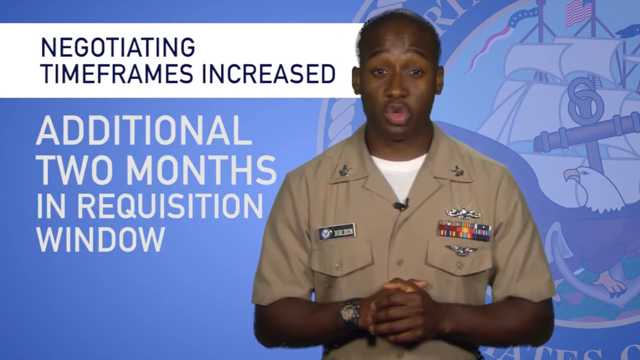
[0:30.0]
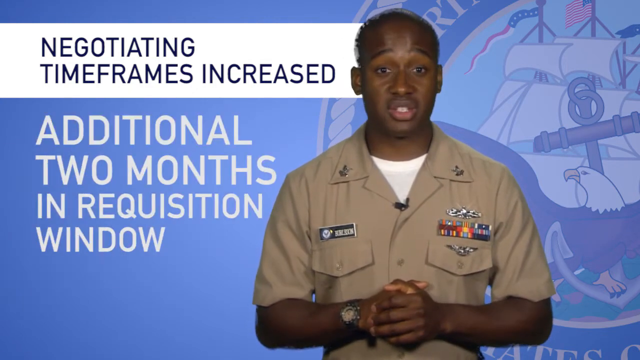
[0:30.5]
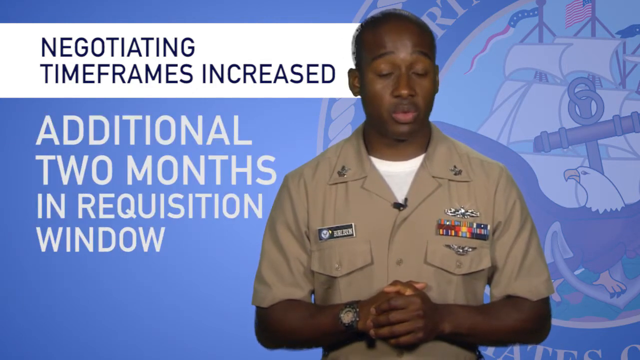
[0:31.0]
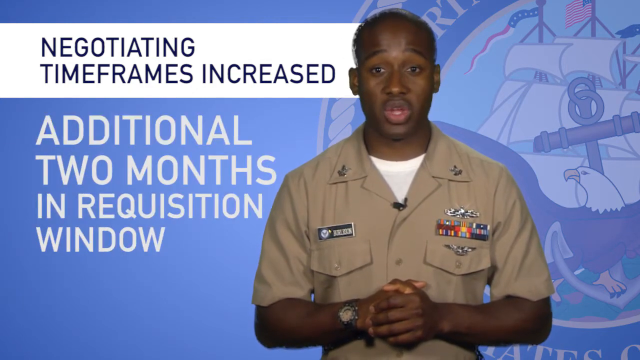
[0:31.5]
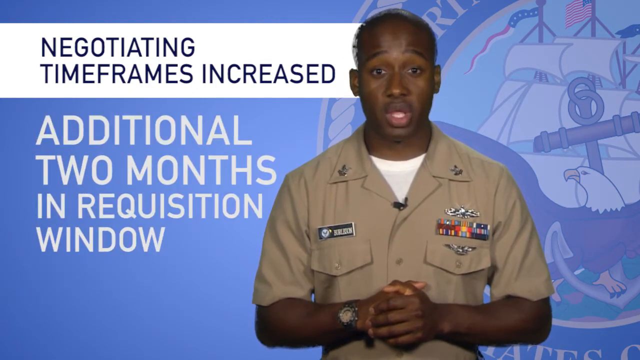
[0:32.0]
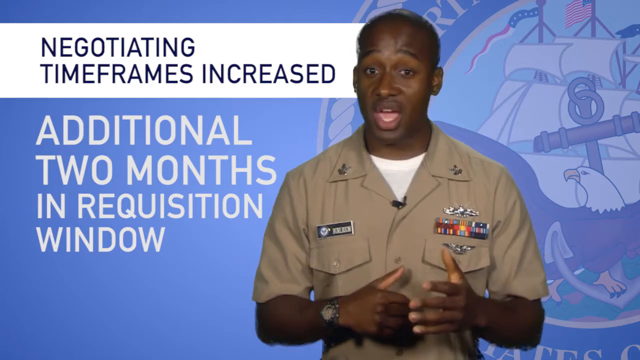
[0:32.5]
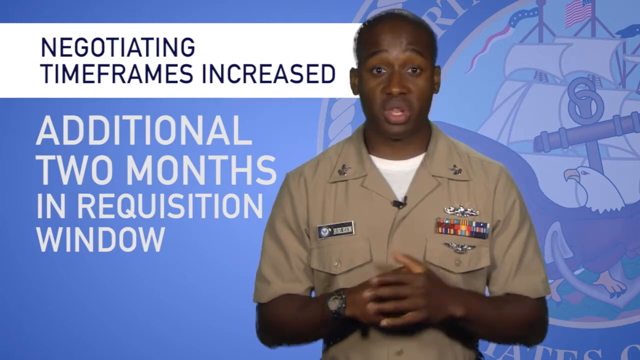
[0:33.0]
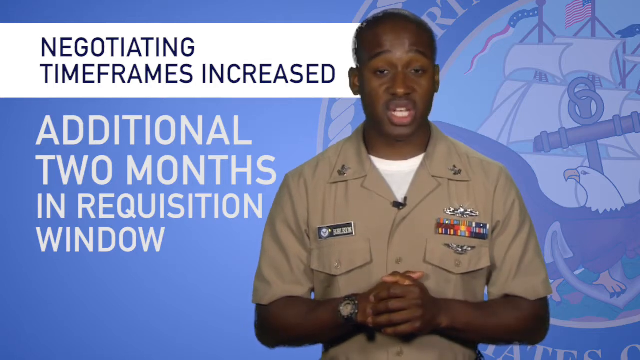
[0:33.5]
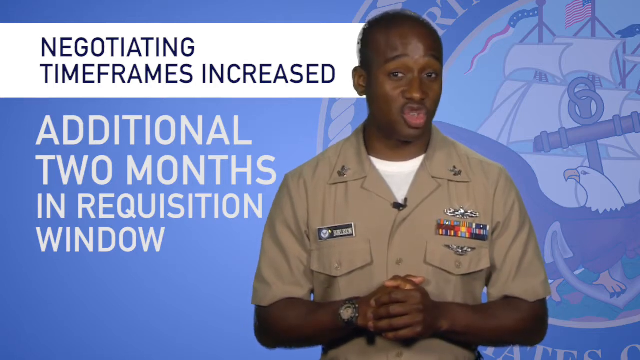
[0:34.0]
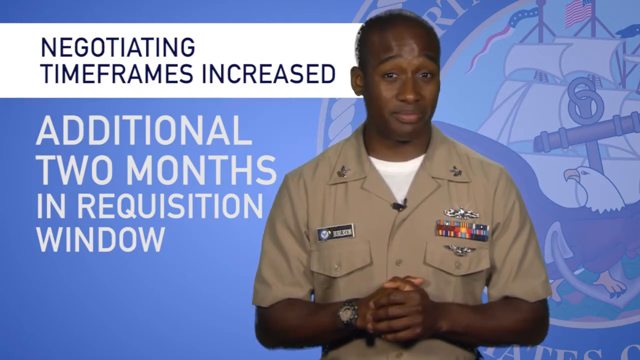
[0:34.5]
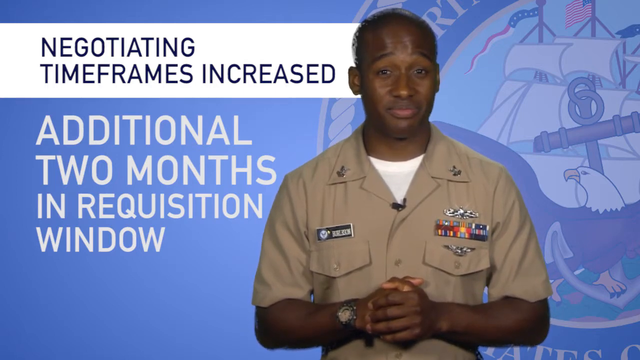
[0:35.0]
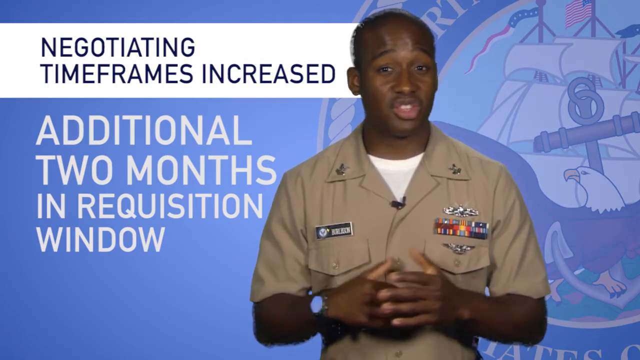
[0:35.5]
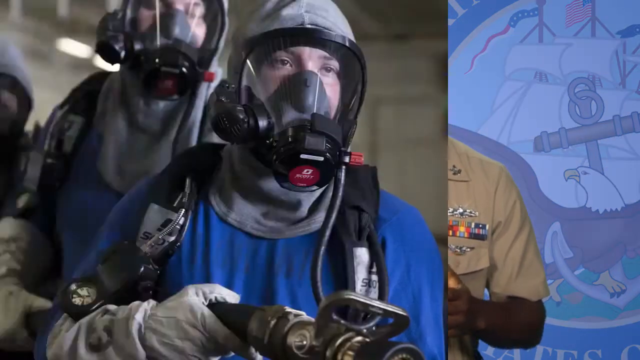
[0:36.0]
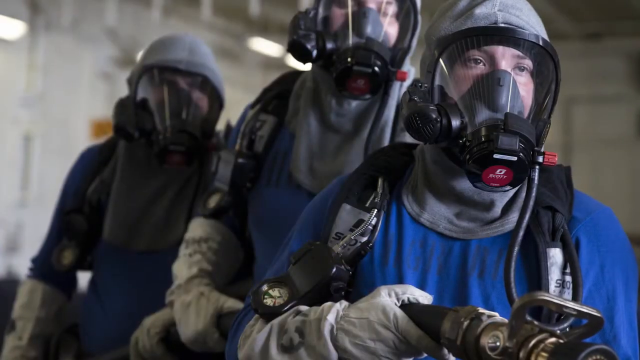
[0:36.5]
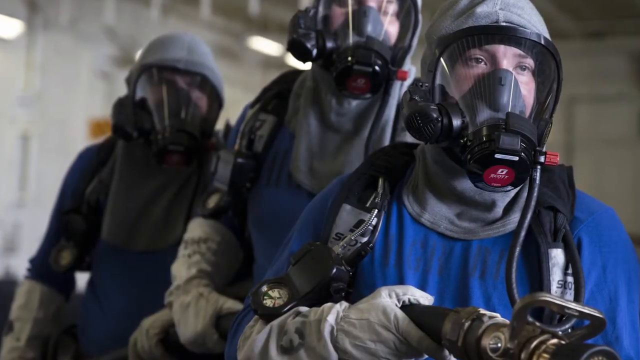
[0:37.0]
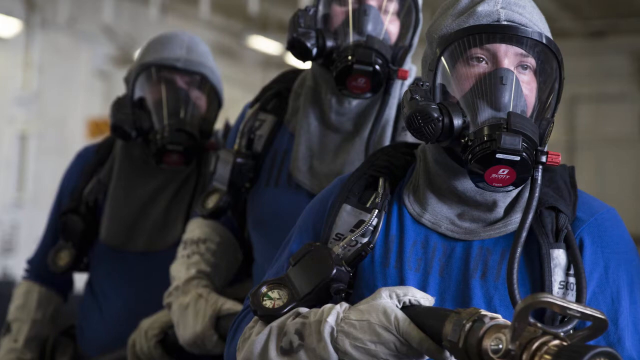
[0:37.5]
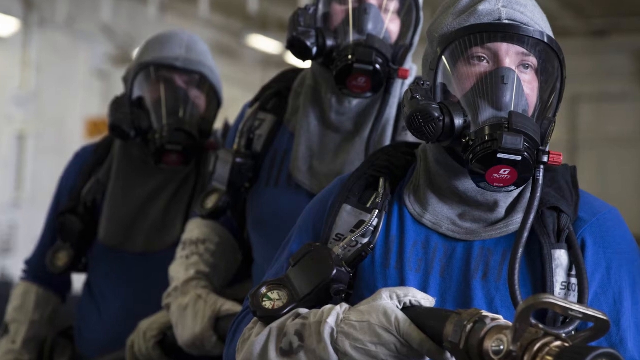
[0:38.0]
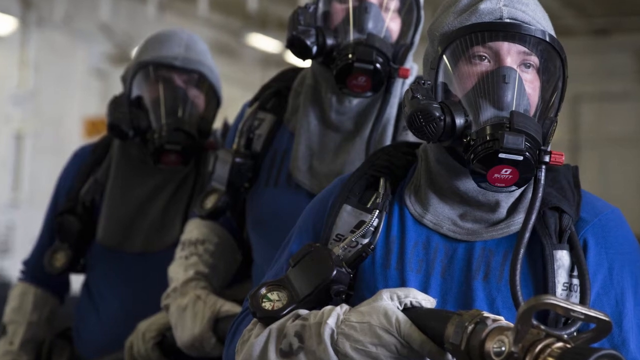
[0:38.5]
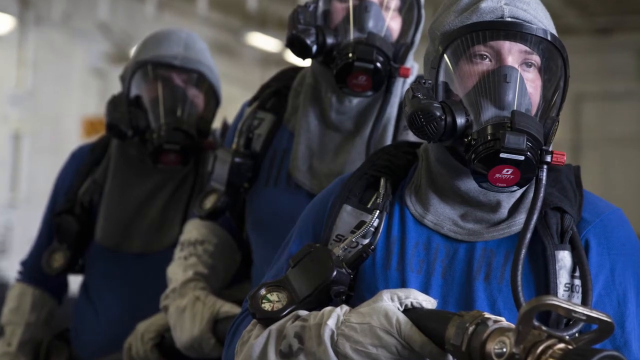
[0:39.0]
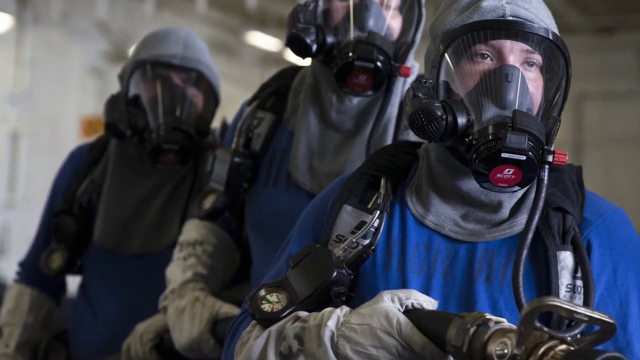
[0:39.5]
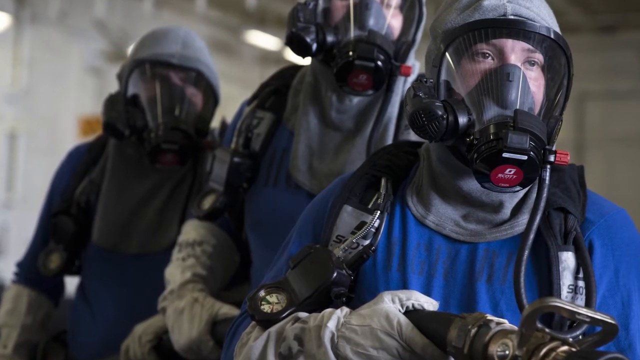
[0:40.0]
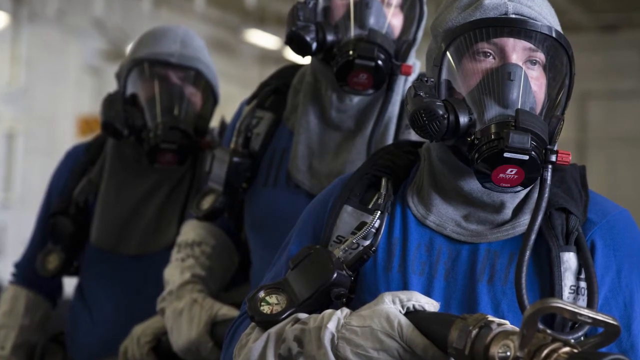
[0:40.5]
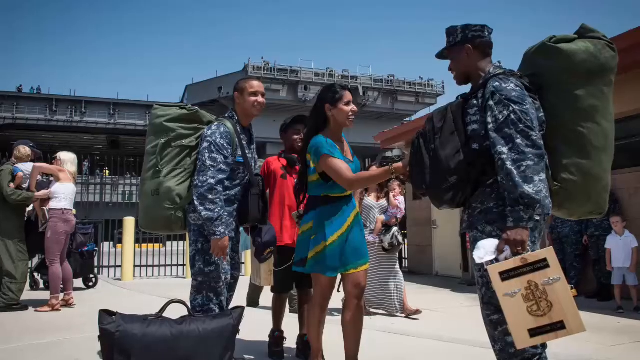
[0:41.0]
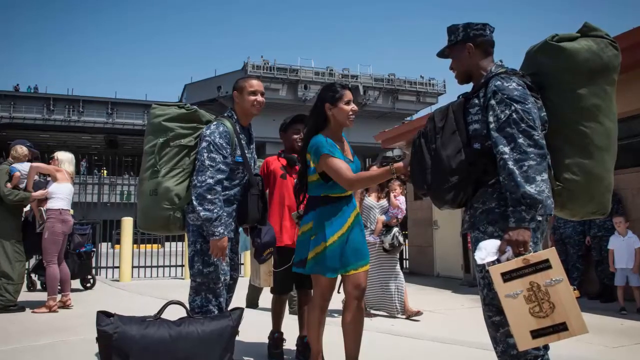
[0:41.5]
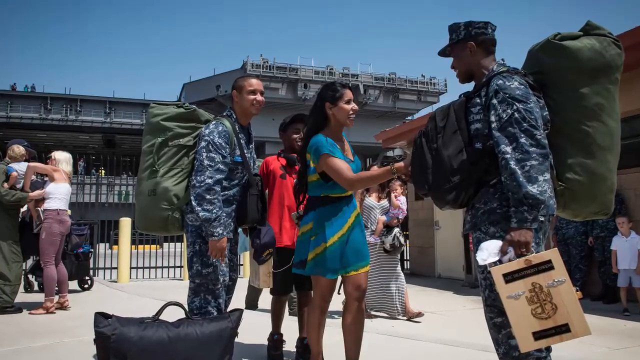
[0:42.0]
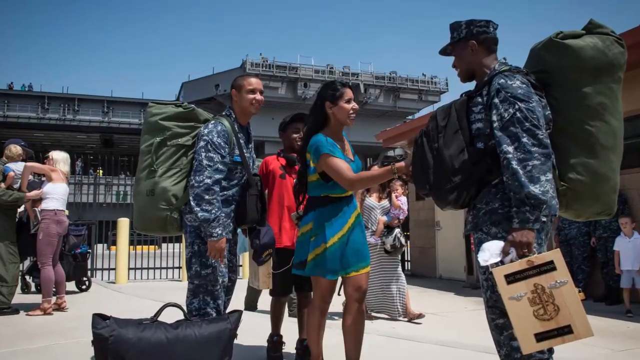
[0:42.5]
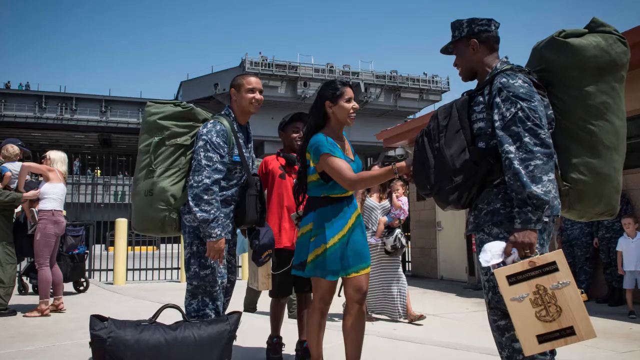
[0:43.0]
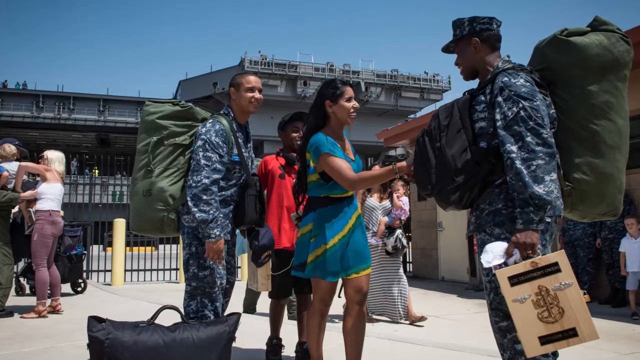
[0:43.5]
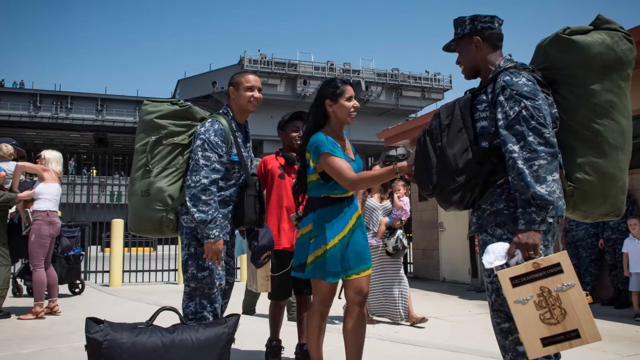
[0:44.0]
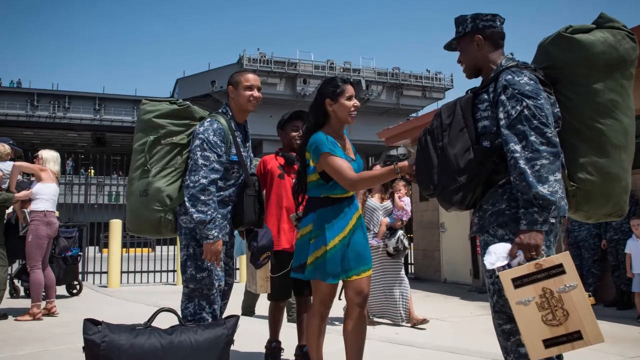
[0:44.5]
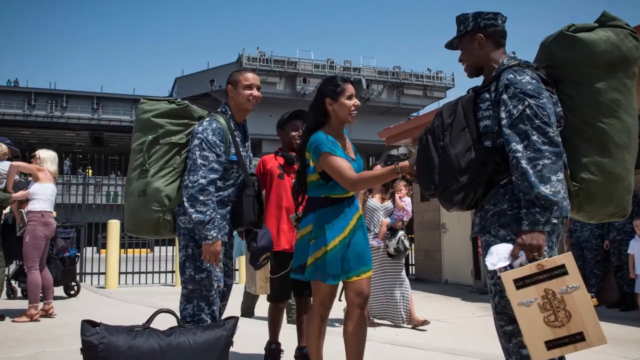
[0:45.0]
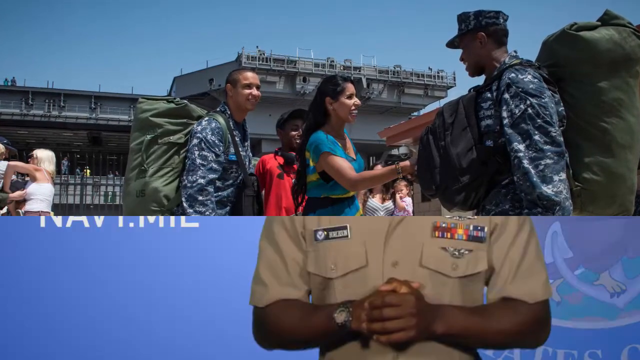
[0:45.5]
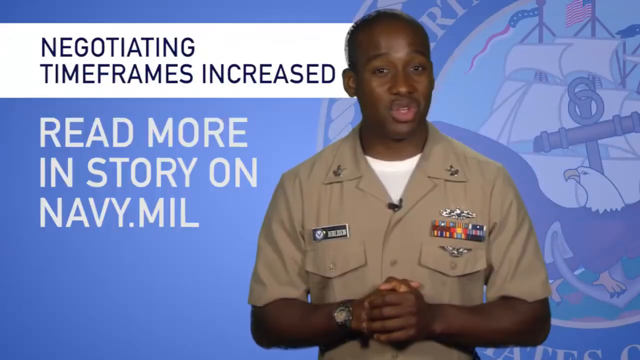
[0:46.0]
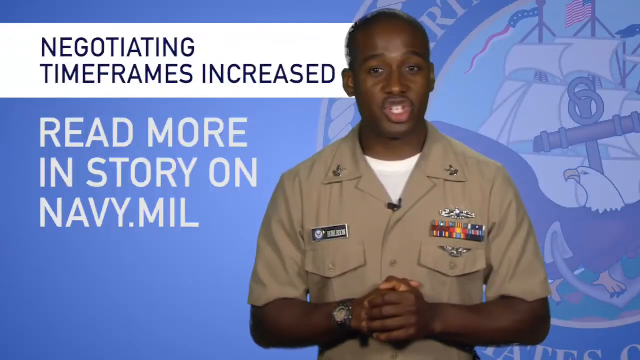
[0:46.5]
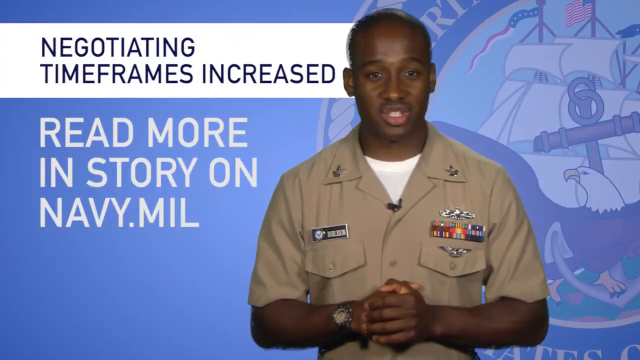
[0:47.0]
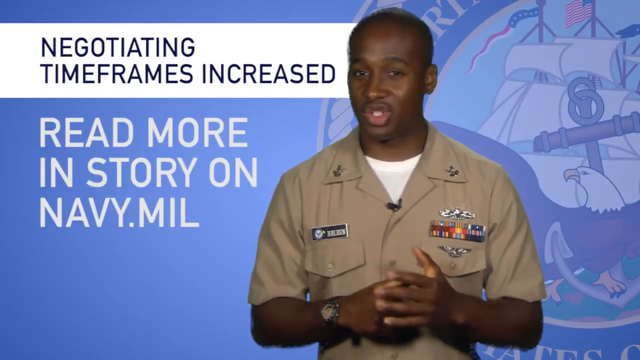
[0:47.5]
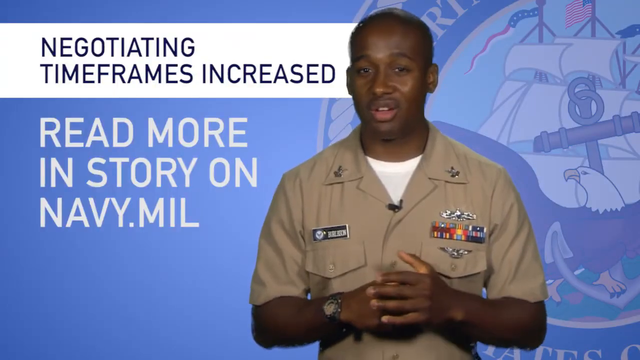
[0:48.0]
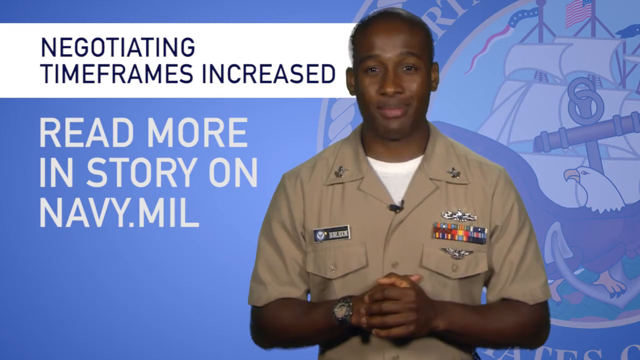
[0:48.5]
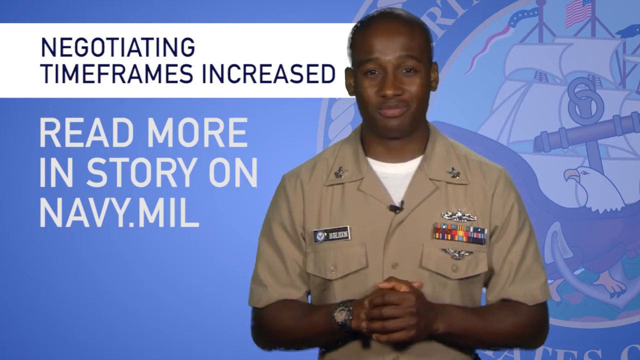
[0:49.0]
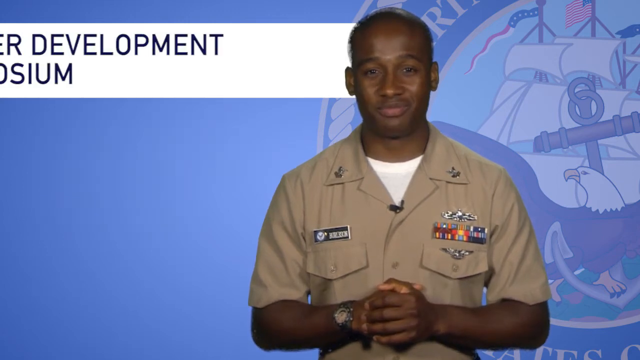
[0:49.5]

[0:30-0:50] A man speaks and presents, with text underneath reading "additional two months in requisition window". He clasps his hands in front of himself. Next, three men appear in protective clothing: grey gloves, blue T-shirts, and protective helmets covering their faces and heads. Then soldiers who look like they have just returned from deployment meet their families in a joyful reunion, hugging and smiling. One male soldier carries a backpack, a satchel on his front and a paper bag in his hand, and reaches out with his other free hand to hug a woman, presumably his wife. Another soldier reaches for a baby from a woman.